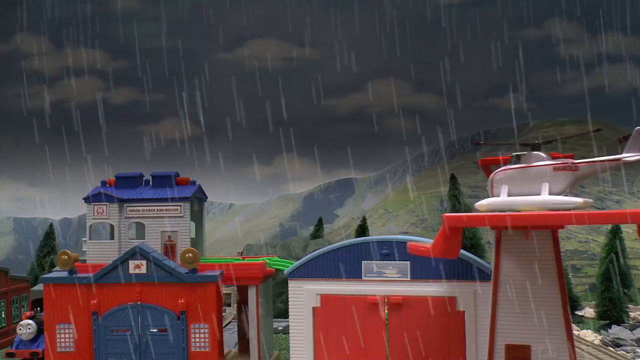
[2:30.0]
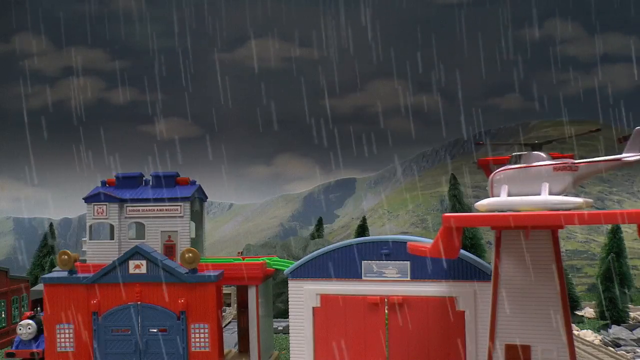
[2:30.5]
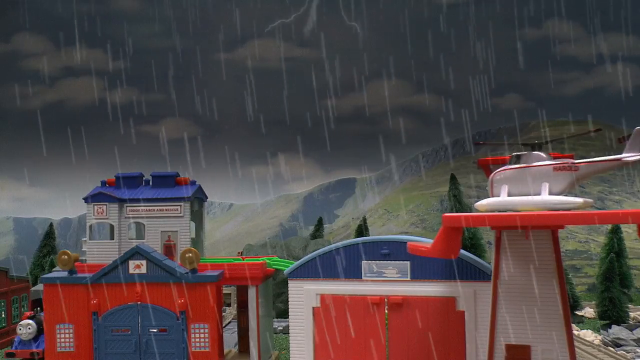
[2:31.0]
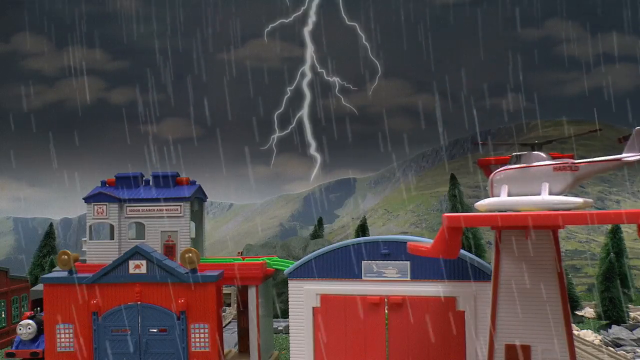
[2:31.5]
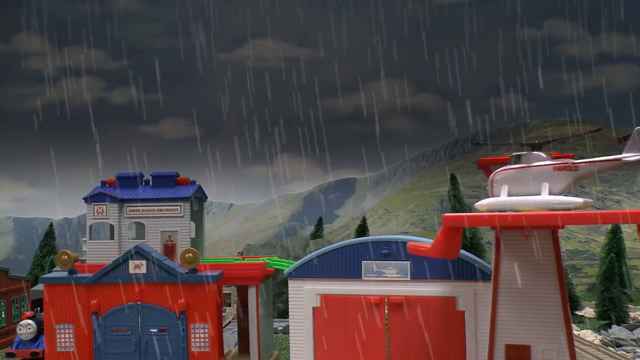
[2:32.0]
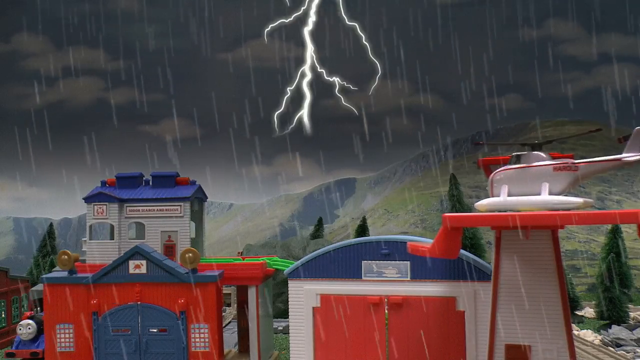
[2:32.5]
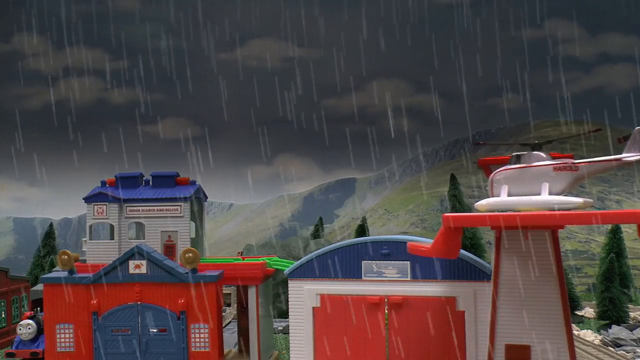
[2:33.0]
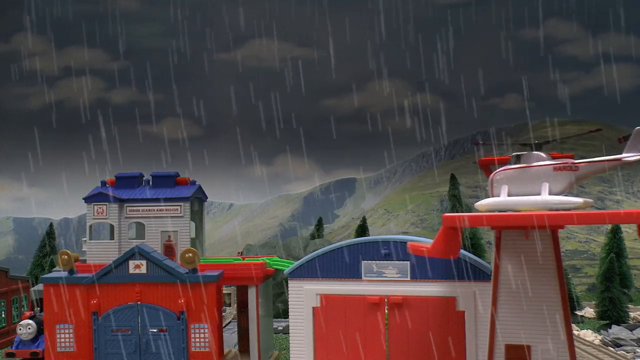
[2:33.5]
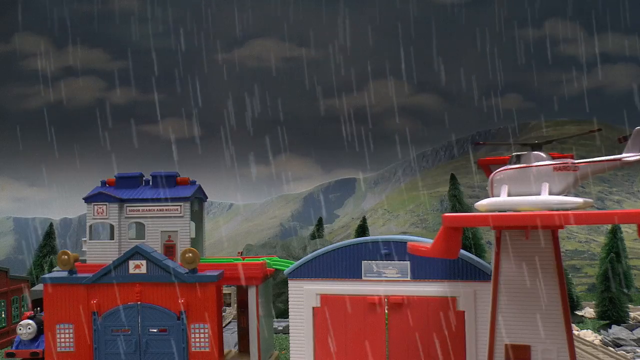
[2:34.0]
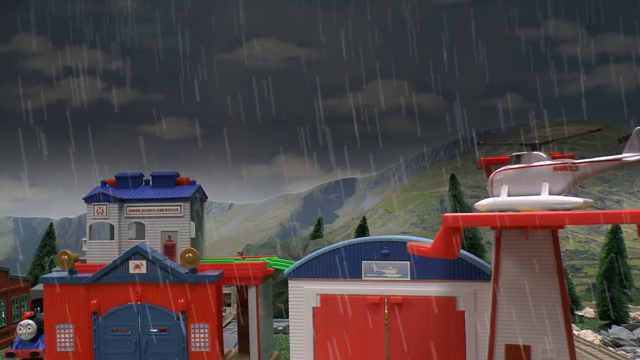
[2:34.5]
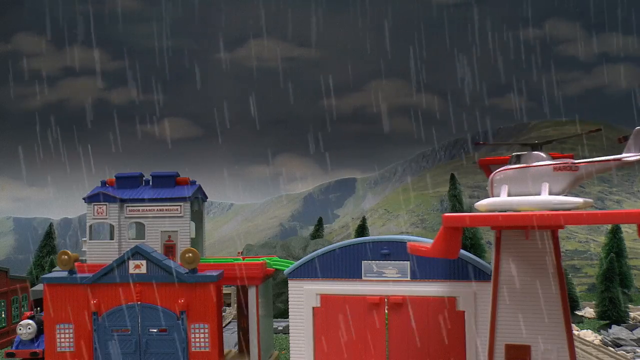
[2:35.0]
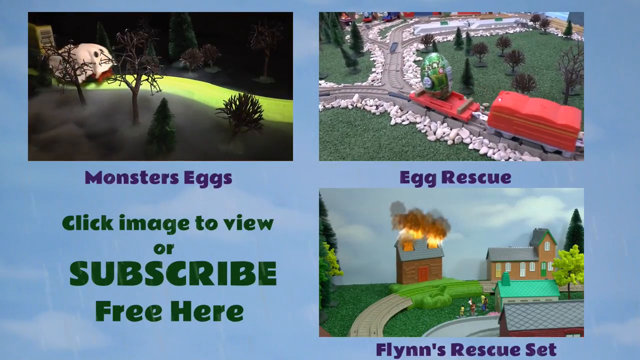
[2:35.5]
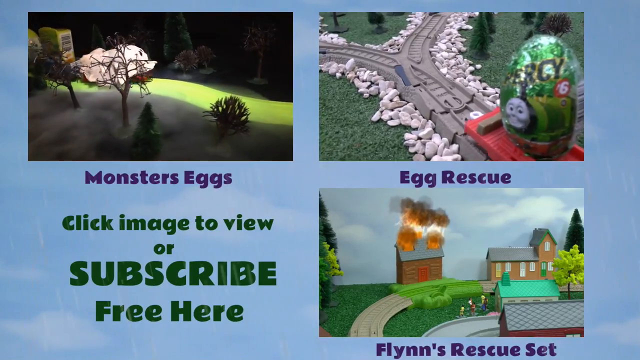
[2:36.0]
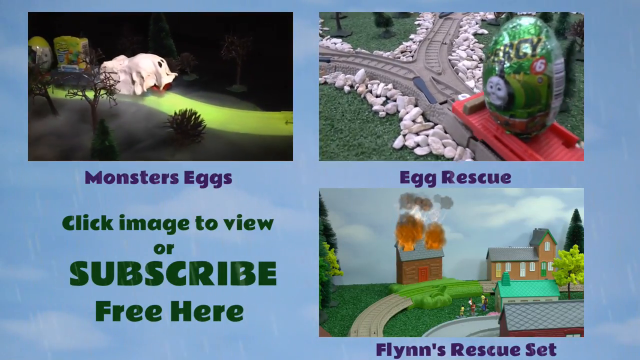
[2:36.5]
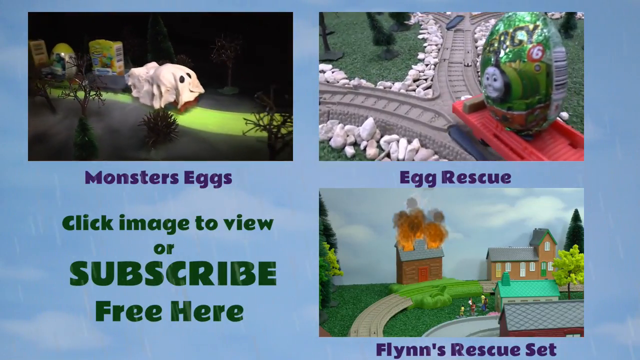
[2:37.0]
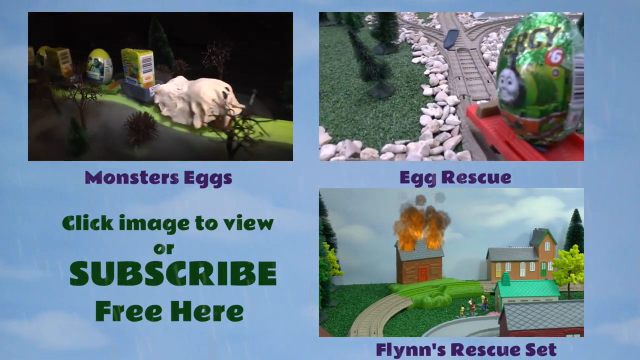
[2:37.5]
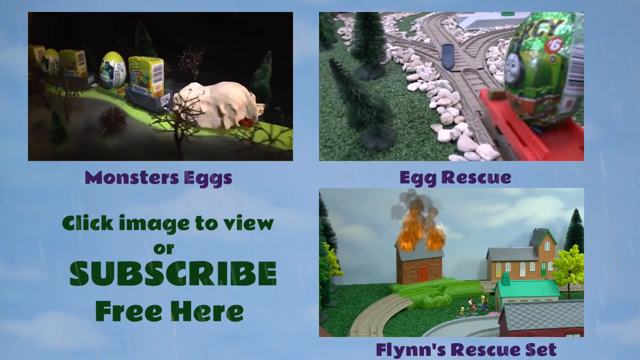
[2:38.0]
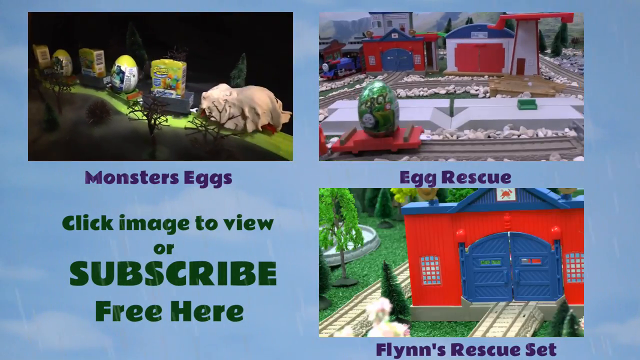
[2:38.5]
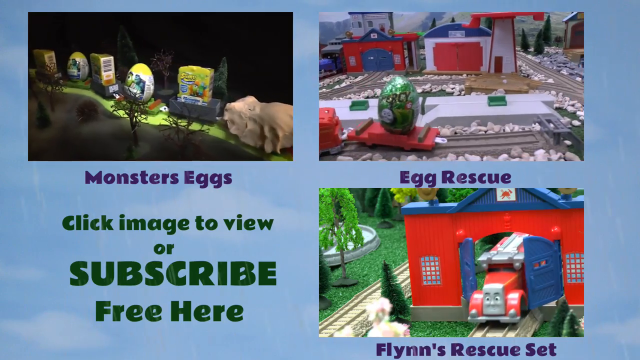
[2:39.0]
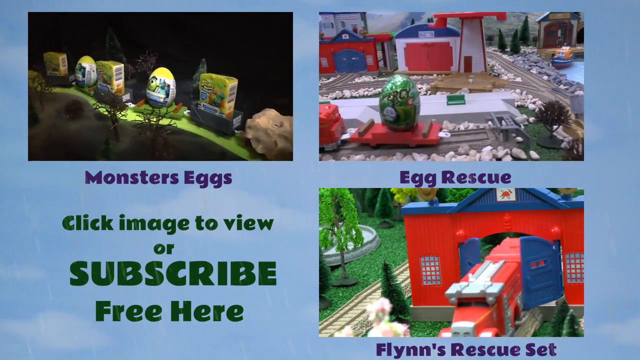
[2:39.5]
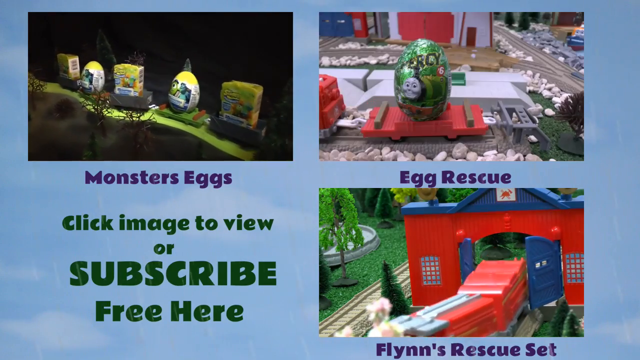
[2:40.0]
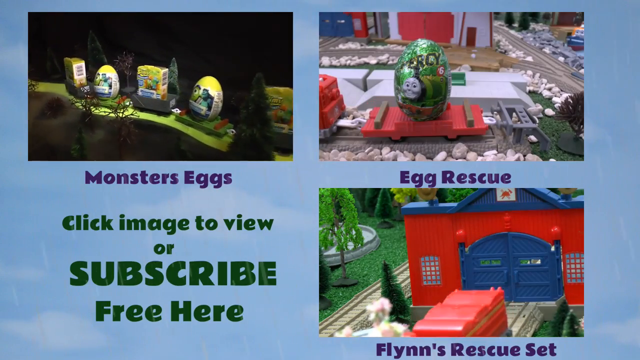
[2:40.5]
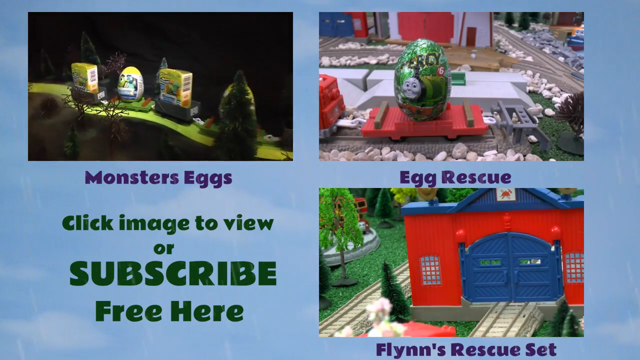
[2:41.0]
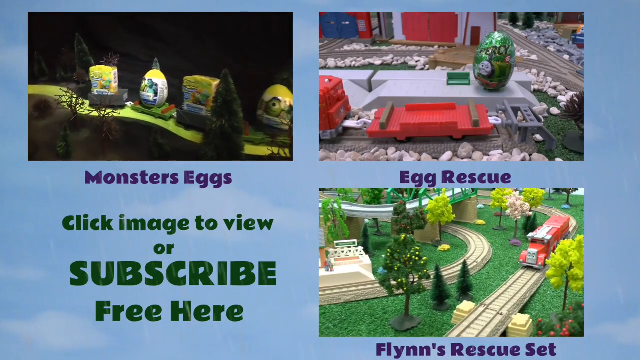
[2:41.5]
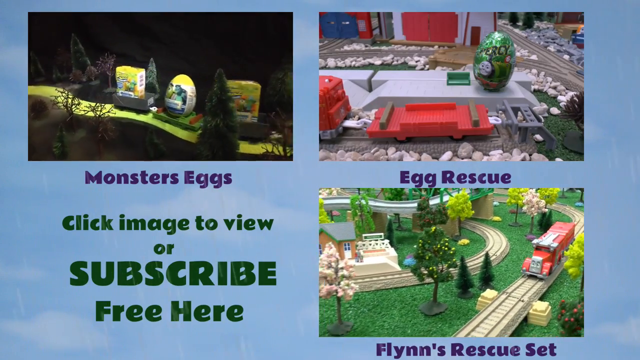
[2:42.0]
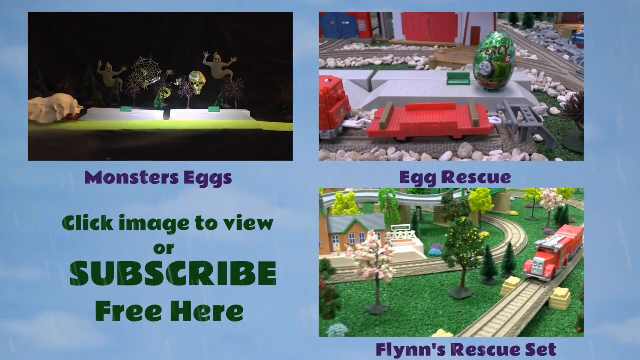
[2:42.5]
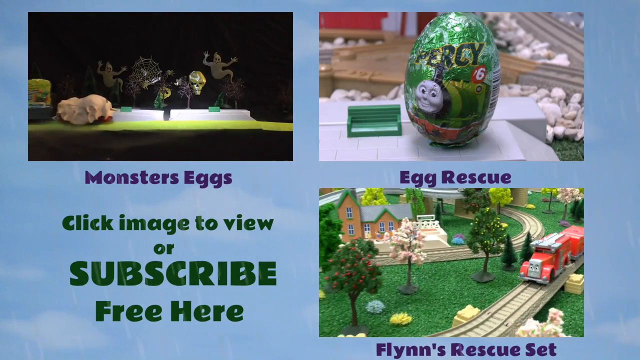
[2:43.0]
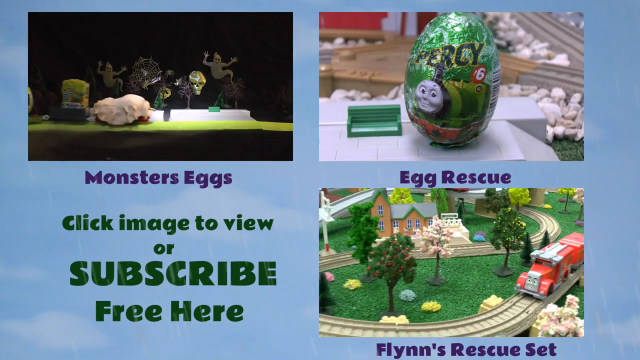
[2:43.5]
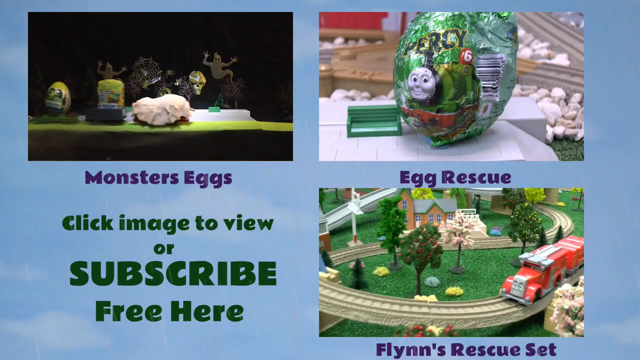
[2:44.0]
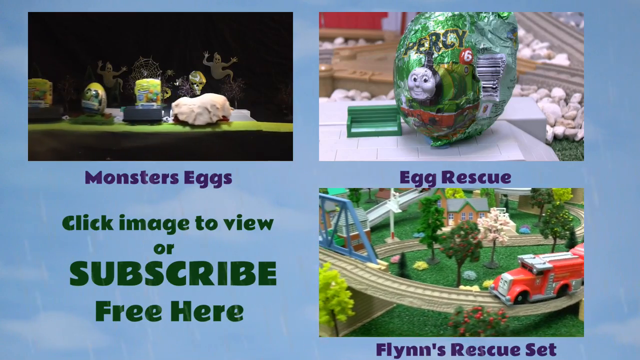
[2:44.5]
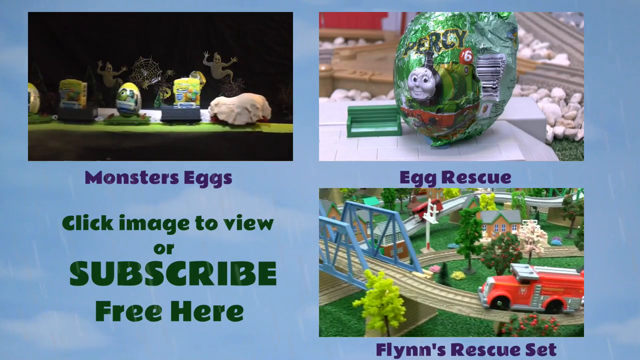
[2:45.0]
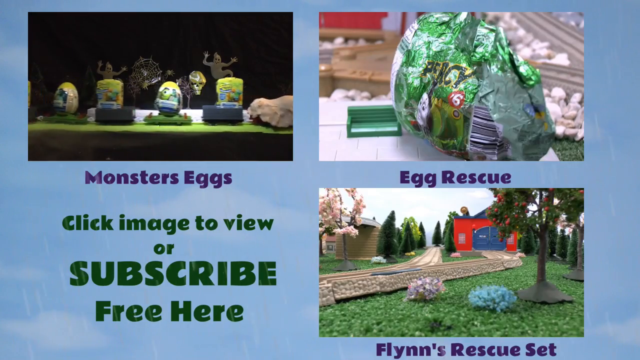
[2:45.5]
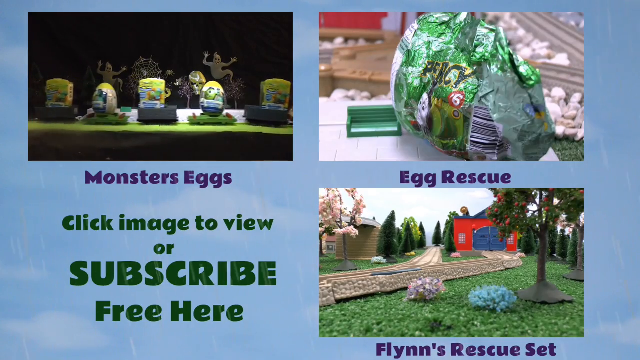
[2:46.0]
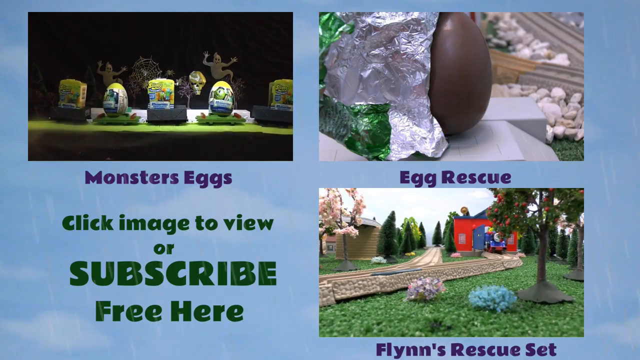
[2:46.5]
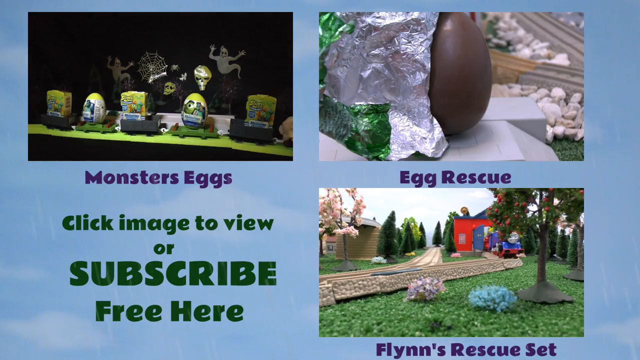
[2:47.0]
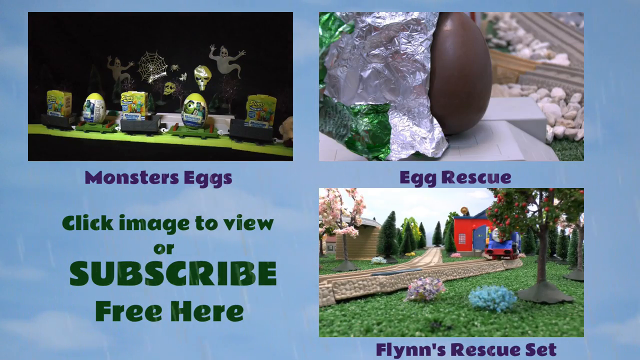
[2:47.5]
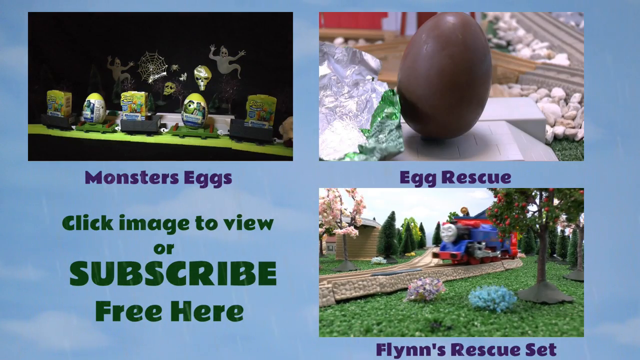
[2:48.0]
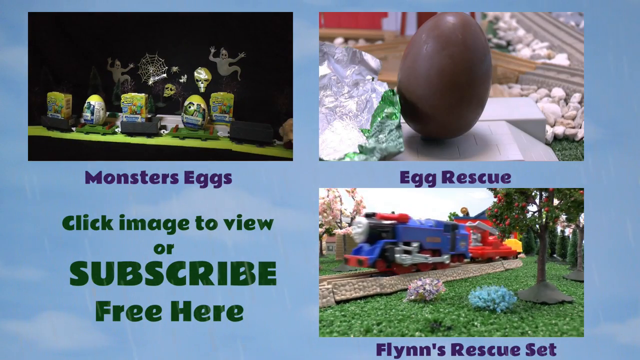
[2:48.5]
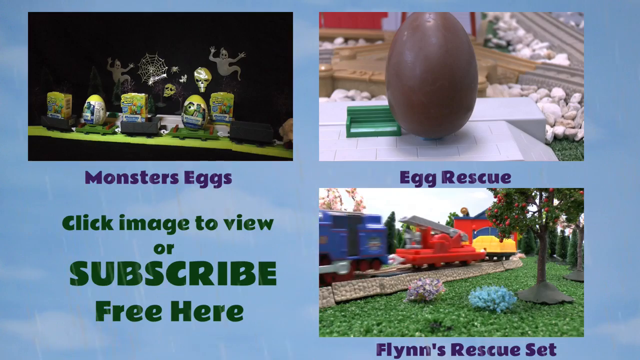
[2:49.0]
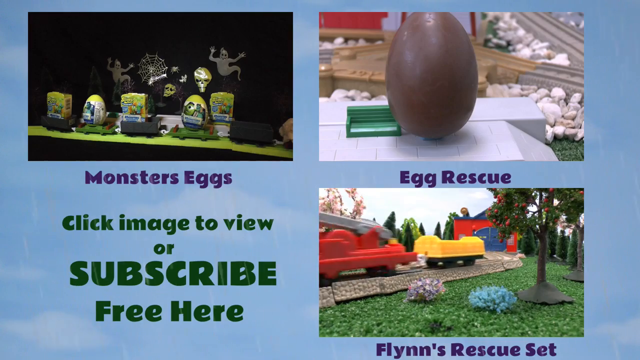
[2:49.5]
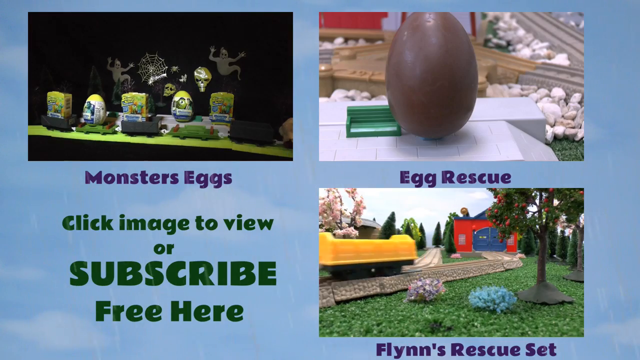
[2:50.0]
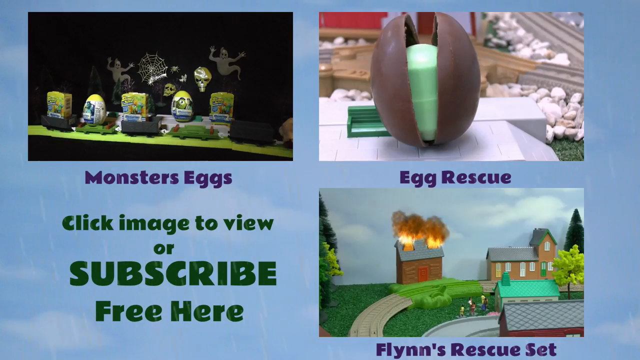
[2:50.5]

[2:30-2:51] The view is back at the original scene, with the plane on the left side, as lightning strikes down the center three or four times. It then cuts to an all blue background holding several videos. The one in the top left shows something like a spooky night, with a train going along with a ghost cover over it, and on the left a train coming up some train tracks; under it blue text says "monster eggs". The one on the right says "egg rescue". Another video at the bottom shows a building on fire and says "Flynn's rescue set". As the animations continue, a fire truck comes out of a red building with big blue doors in the bottom right one. In the bottom left corner, bold green text says "click image to view or subscribe here free". Things keep moving on the tracks in the different videos. The top left one at one point shows spooky creatures hanging on the wall in a dark area, with ghosts, cobwebs and skulls hanging on the wall. In the egg rescue one, an egg is brought up to a platform and unwrapped, with chocolate underneath. The bottom one shows the train and other things going along the train tracks toward the building that is on fire.